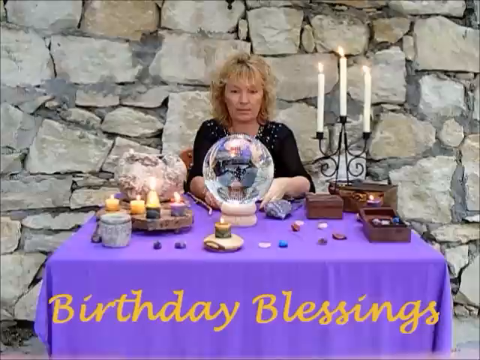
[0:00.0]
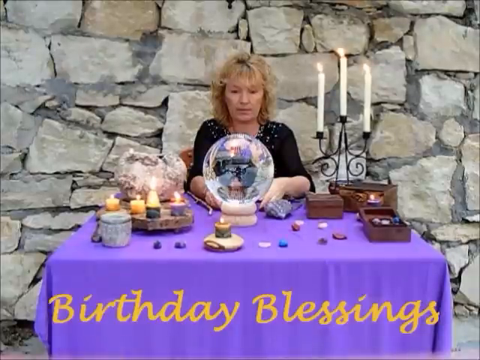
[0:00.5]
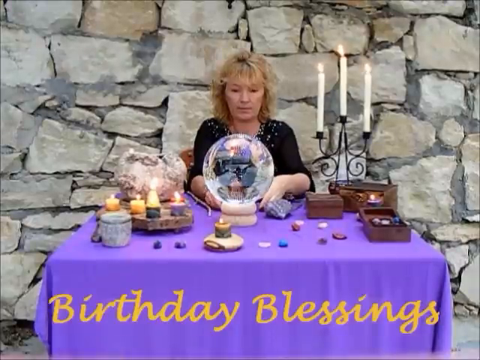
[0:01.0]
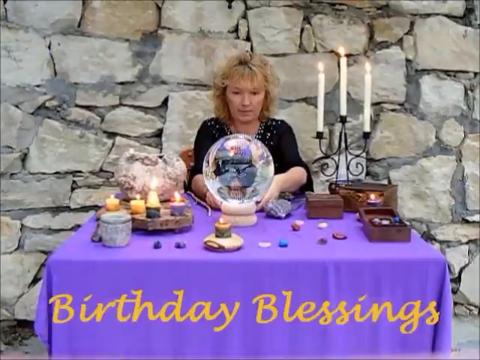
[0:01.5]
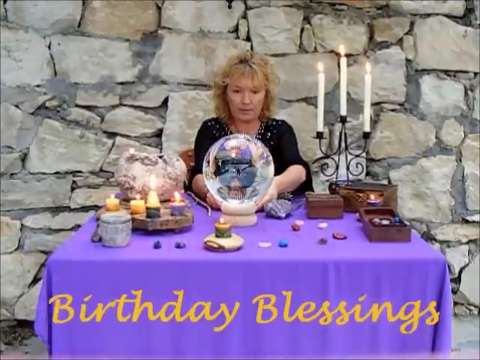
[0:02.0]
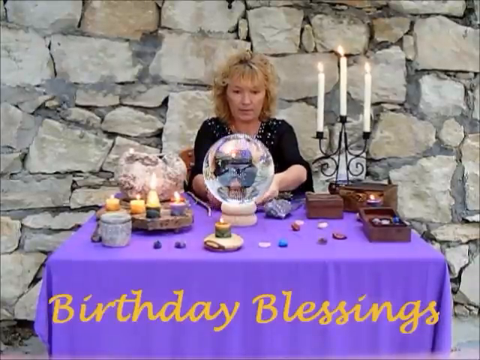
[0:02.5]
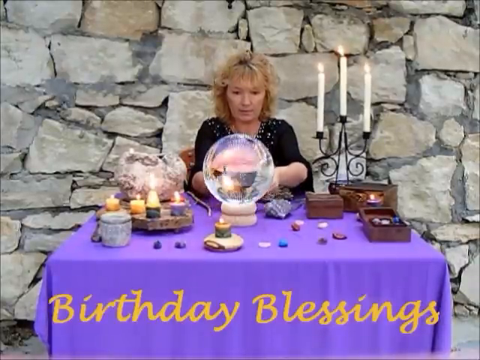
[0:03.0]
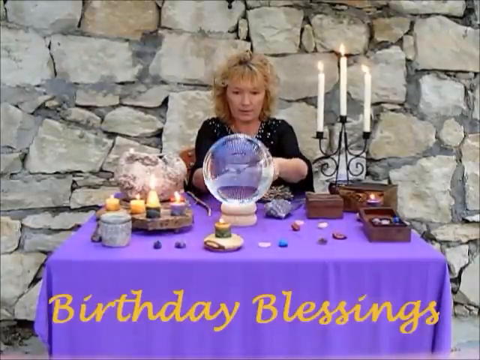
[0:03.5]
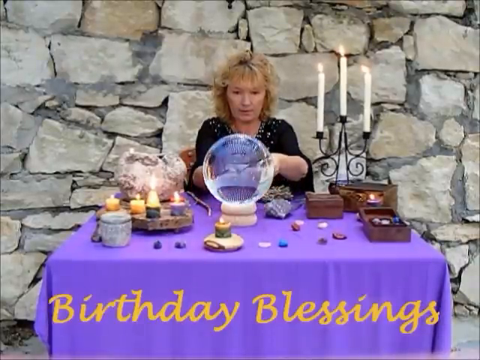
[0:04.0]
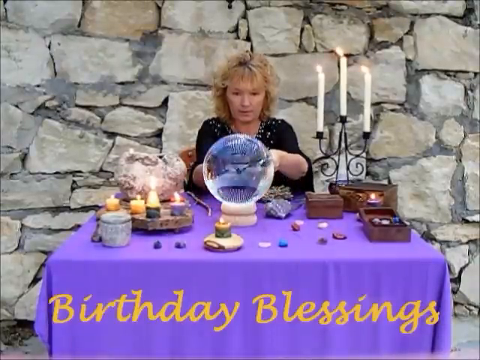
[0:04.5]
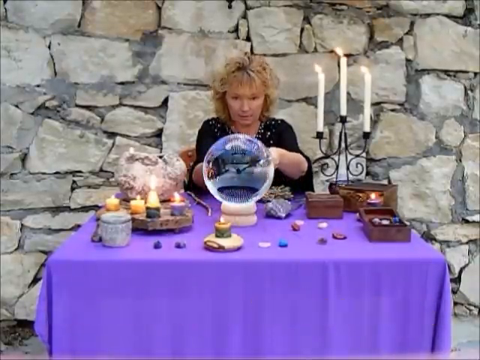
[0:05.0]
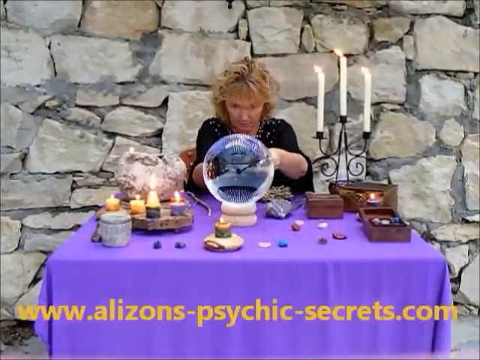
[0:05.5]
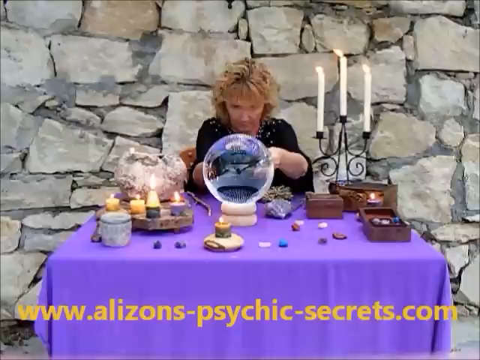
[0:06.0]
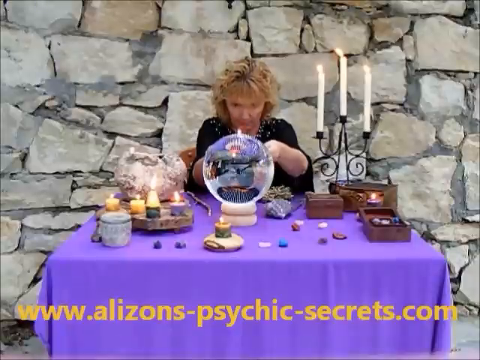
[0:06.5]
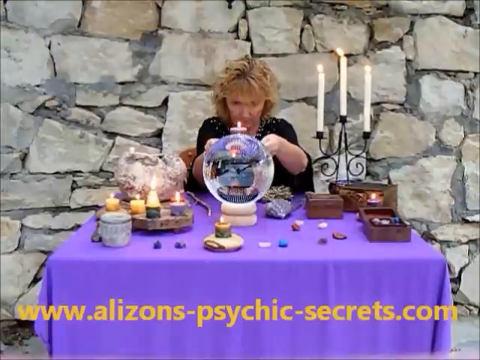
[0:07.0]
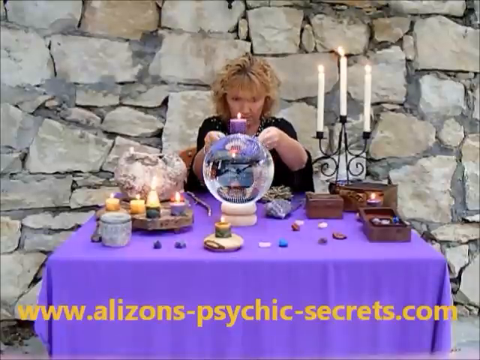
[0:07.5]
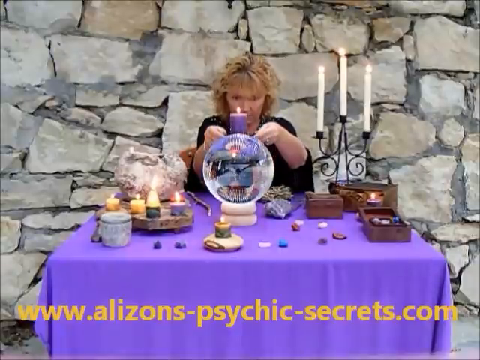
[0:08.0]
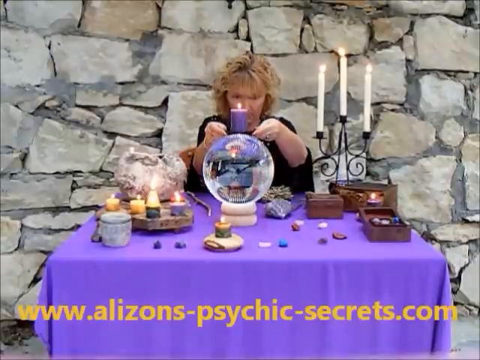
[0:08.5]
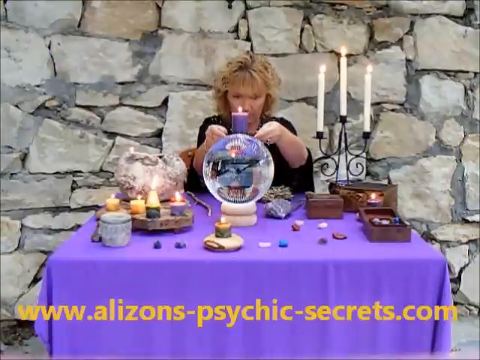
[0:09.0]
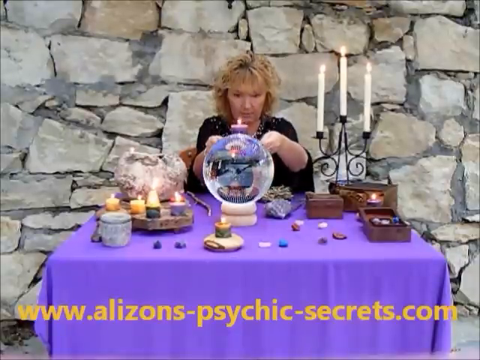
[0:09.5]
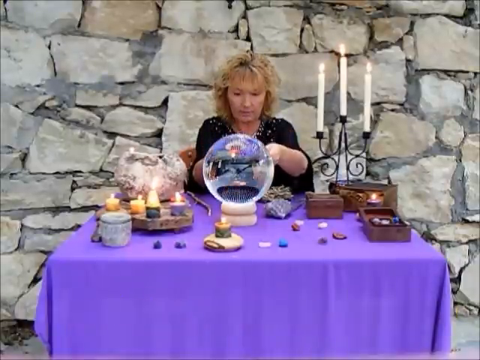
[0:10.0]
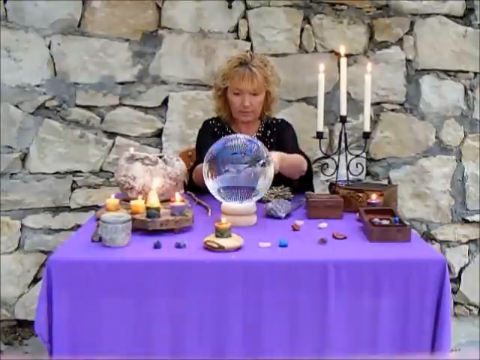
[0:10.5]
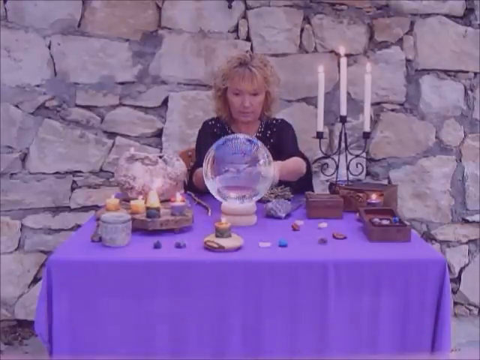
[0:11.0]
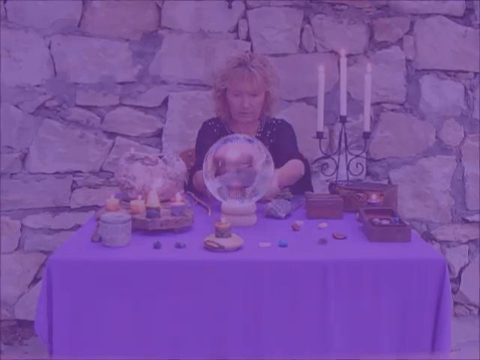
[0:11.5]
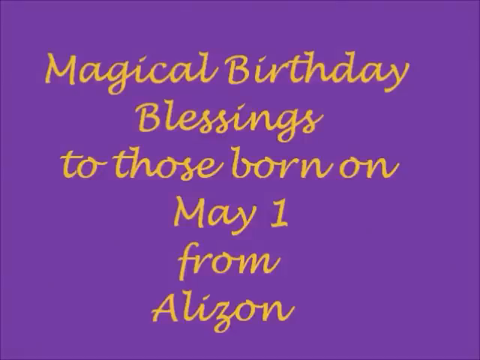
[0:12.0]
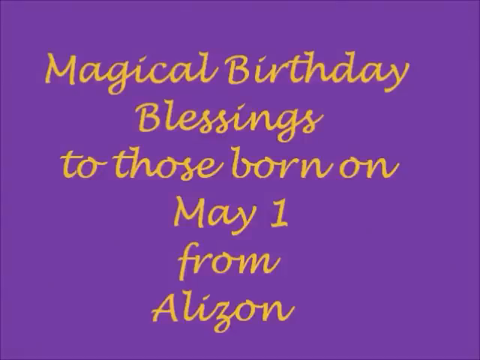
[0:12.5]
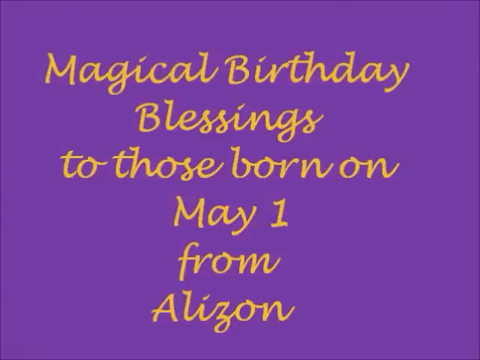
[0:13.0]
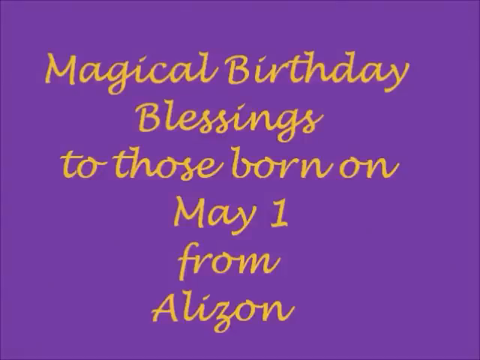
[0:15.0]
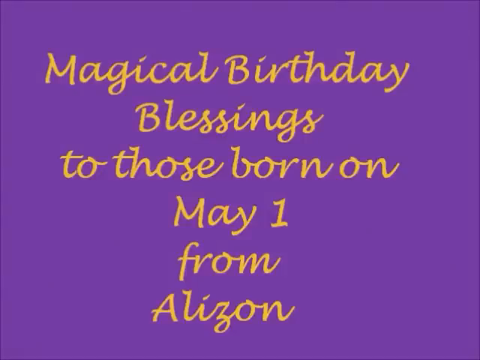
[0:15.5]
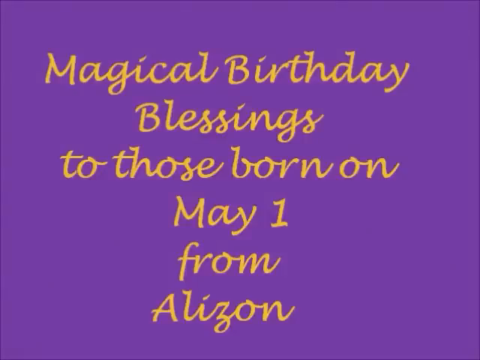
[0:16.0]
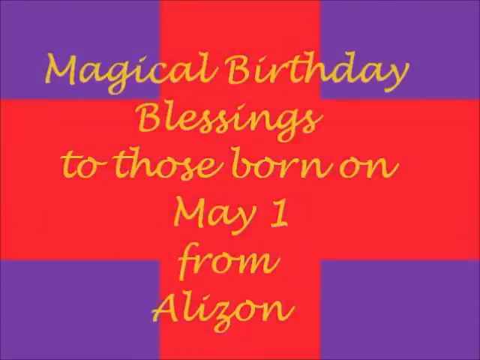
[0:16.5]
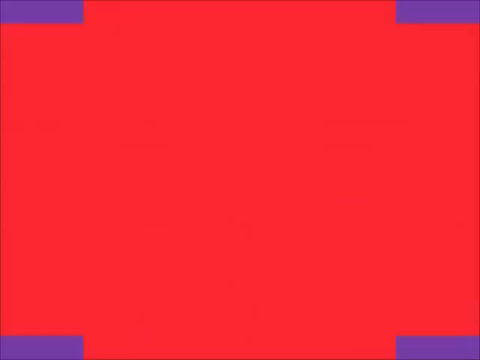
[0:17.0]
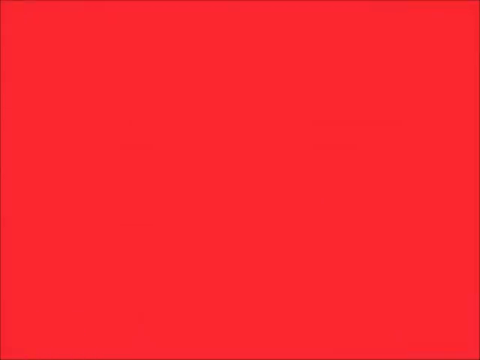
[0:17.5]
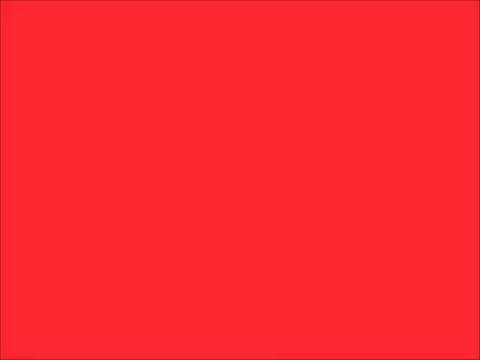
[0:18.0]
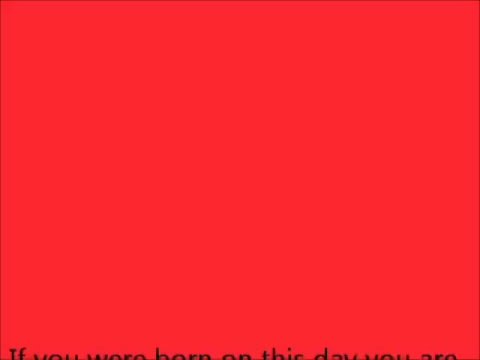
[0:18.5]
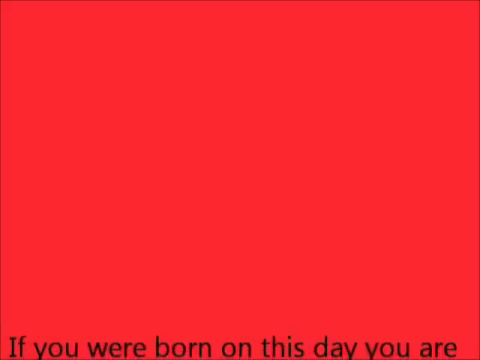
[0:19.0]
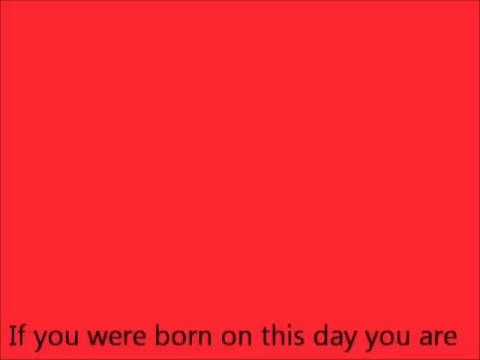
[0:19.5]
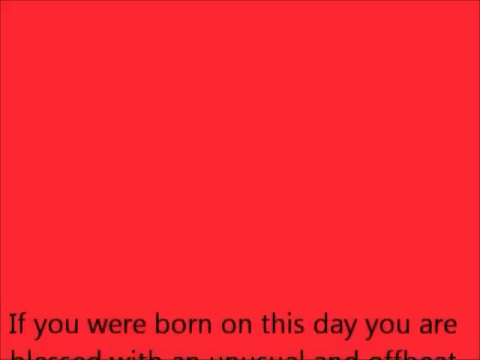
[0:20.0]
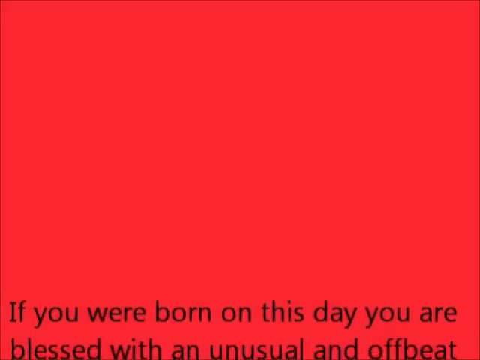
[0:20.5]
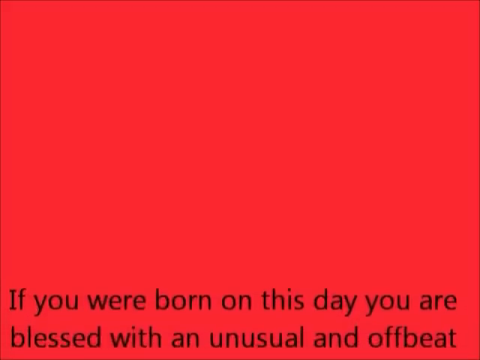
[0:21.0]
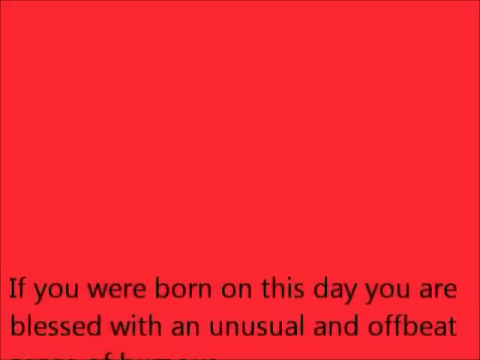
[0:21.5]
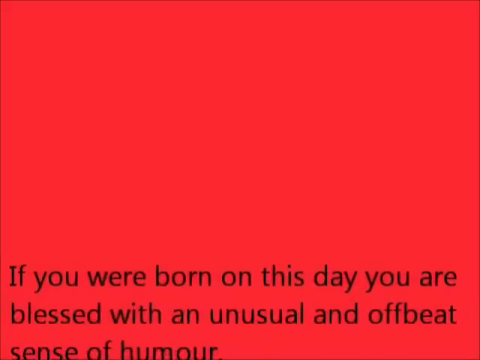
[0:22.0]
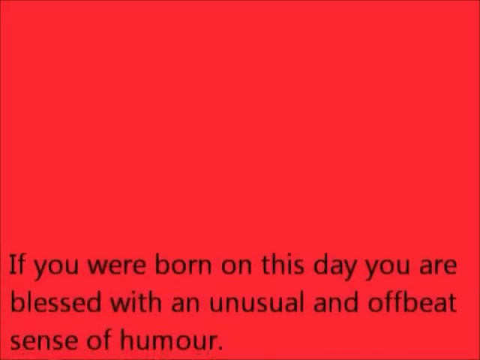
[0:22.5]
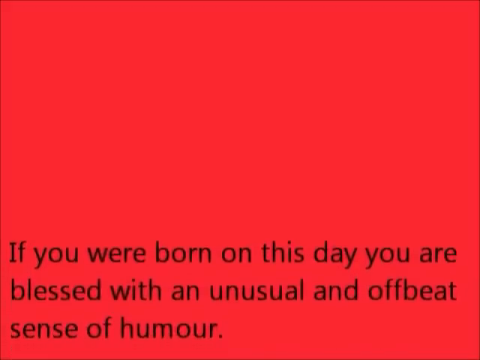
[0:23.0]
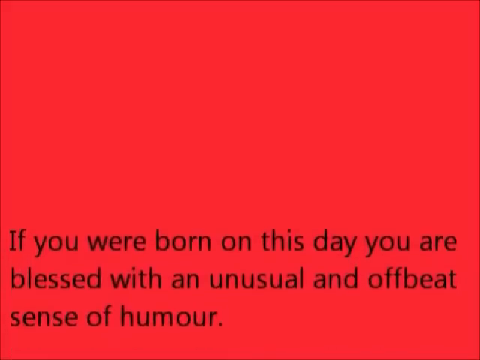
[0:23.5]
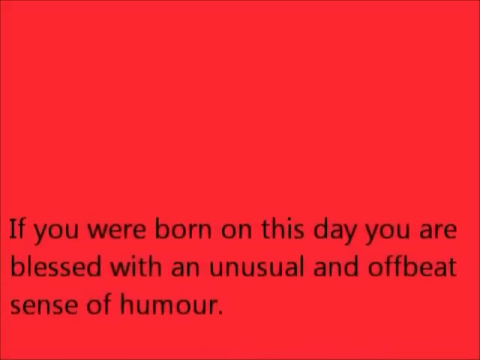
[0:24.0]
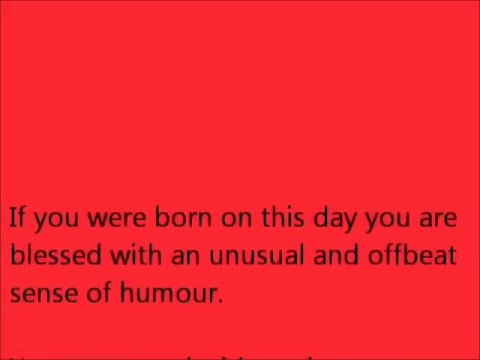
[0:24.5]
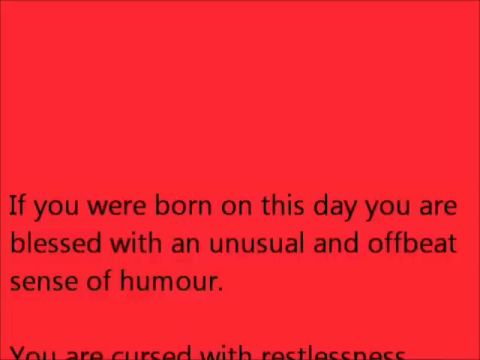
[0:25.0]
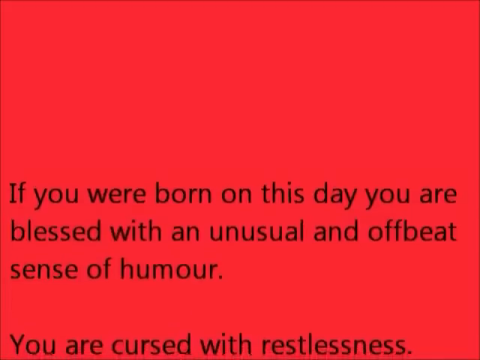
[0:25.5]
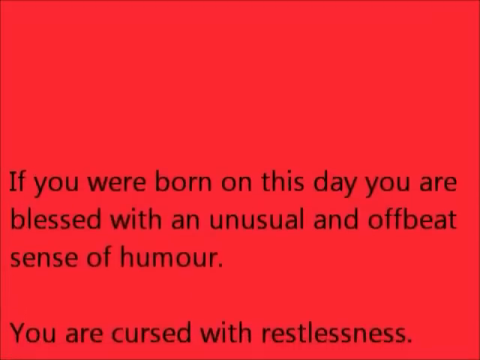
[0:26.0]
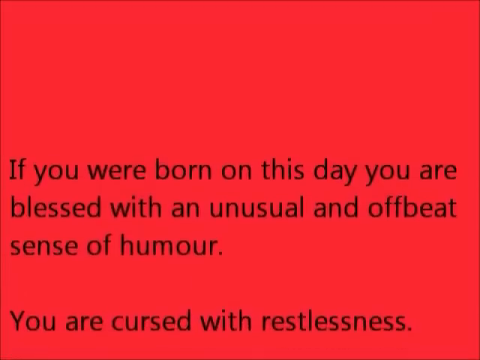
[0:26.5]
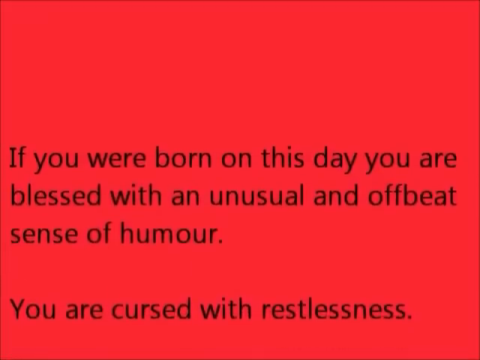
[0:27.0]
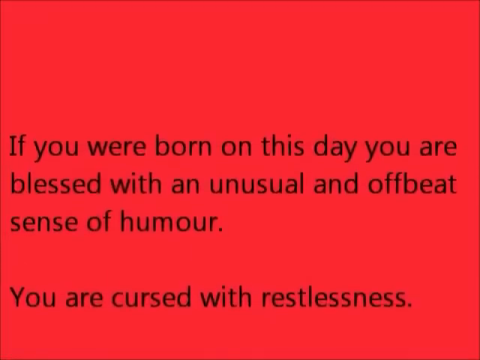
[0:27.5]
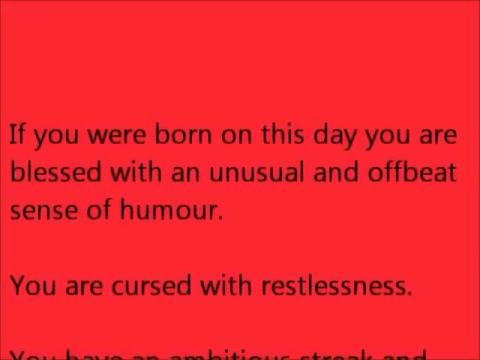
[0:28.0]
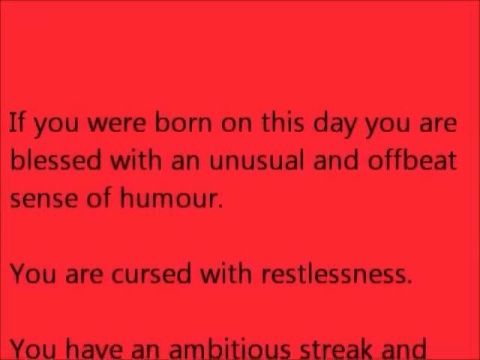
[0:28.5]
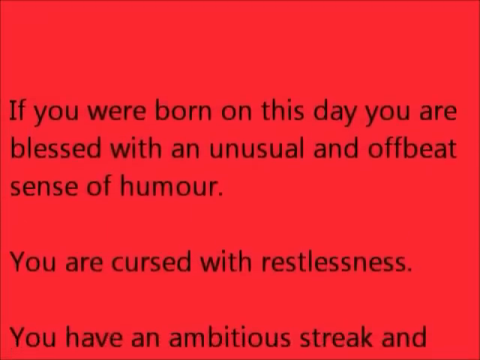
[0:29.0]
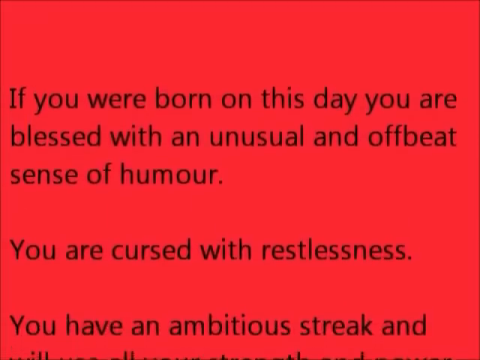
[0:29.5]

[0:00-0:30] A woman who is apparently someone who does horoscopes appears on screen. She is a white woman with brown hair who appears to be between 40 and 55 years old. In front of her she holds what seems to be a ball like the ones psychics use, and the words "birthday blessings" are written on the screen. On the table where she is seated there are candles: three white candles on a candle holder, along with the ball, and smaller candles around. She holds a purple candle, which goes on to change the colour of the screen. The text then reads "magical birthday blessings to those born on May 1 from Alison." The screen changes to red, and the text says "if you were born on this day you are blessed with an unusual and offbeat sense of humour. You are cursed with restlessness."